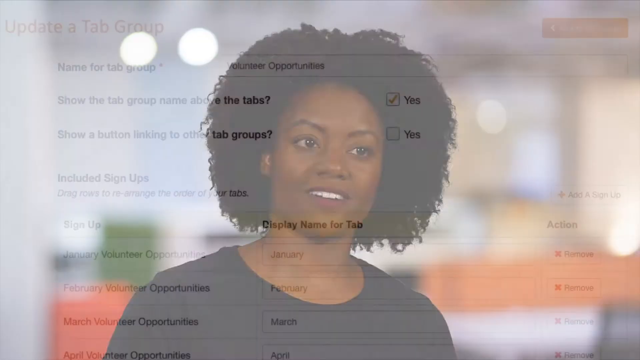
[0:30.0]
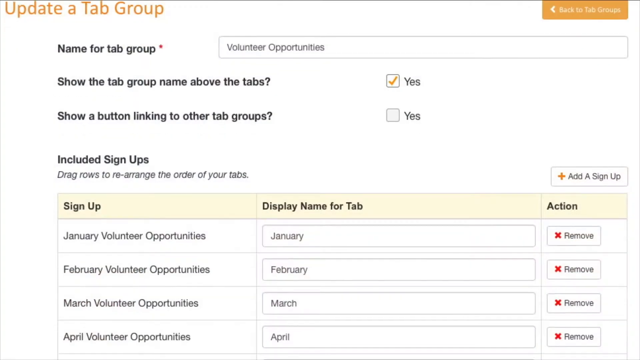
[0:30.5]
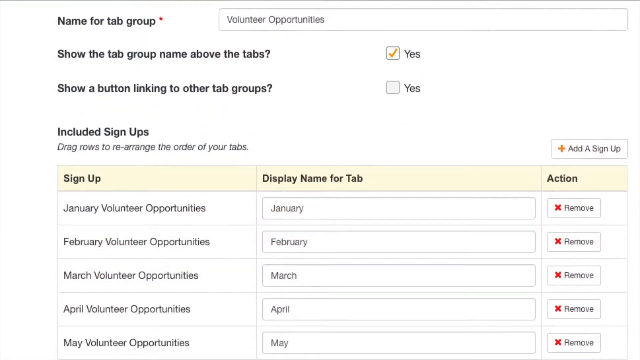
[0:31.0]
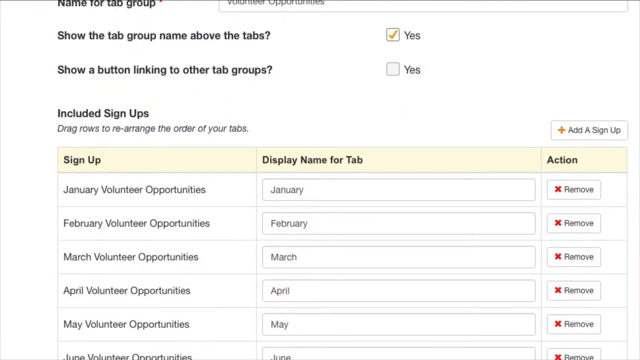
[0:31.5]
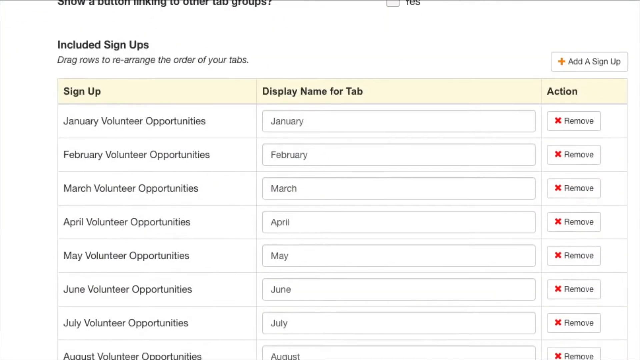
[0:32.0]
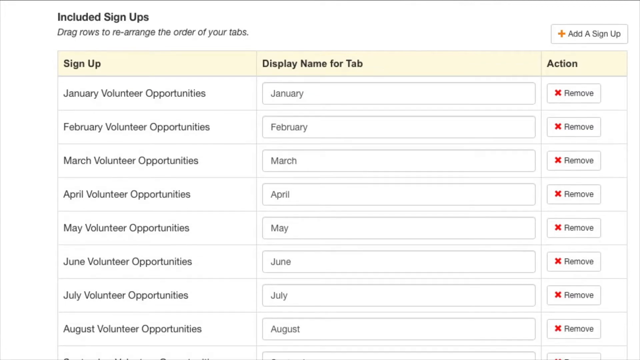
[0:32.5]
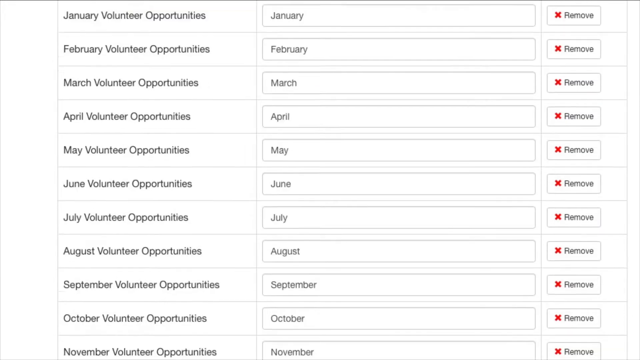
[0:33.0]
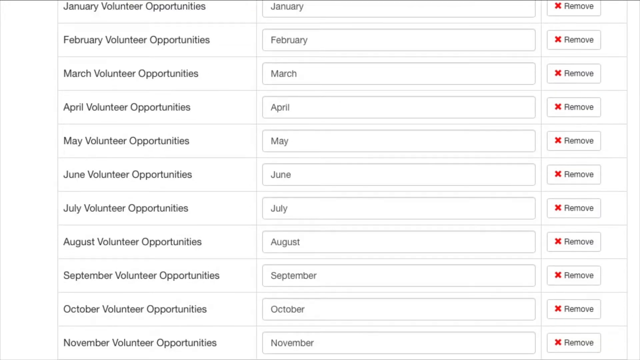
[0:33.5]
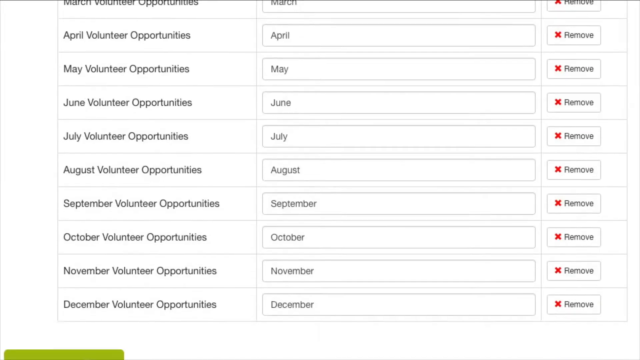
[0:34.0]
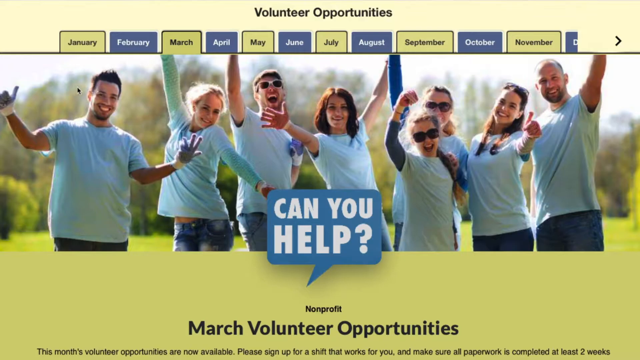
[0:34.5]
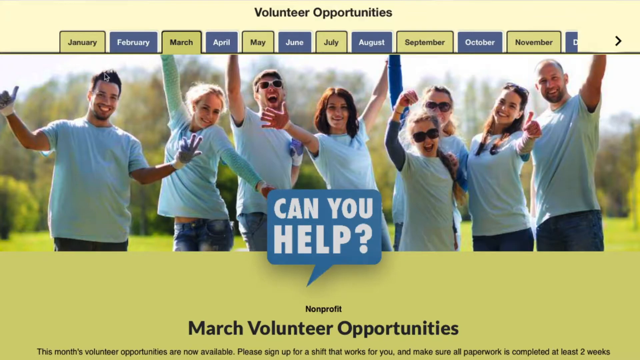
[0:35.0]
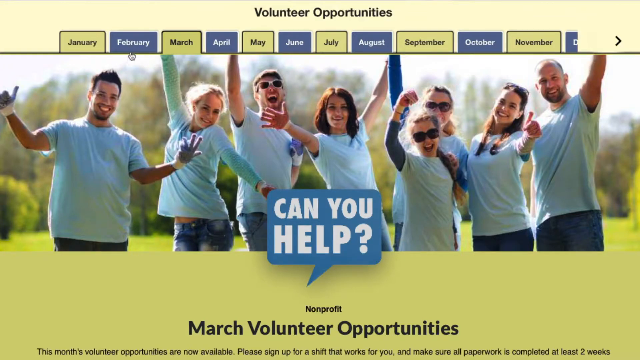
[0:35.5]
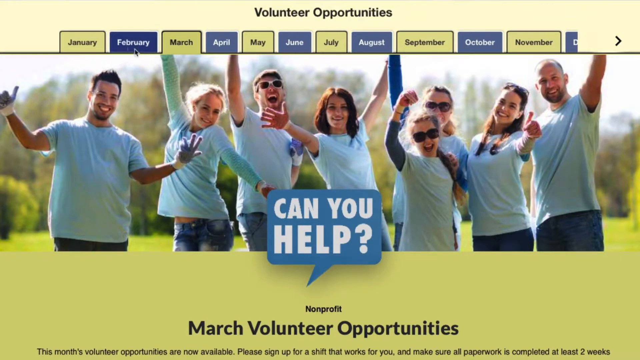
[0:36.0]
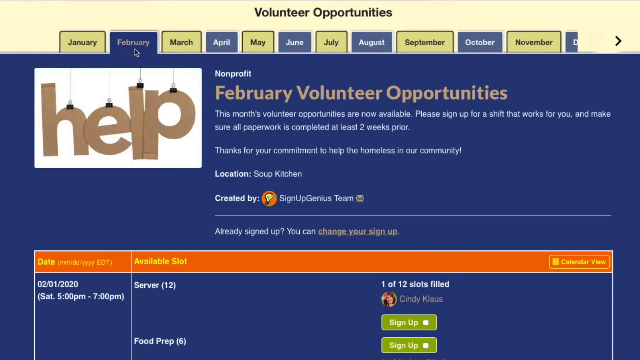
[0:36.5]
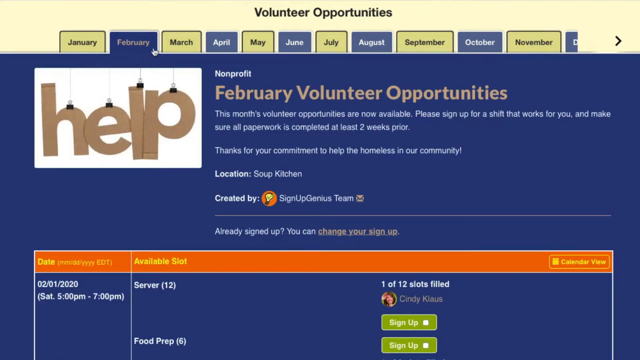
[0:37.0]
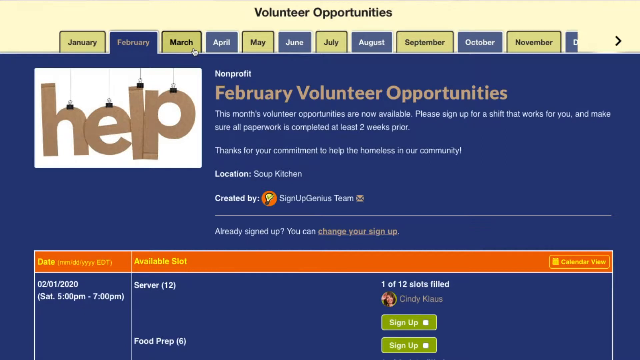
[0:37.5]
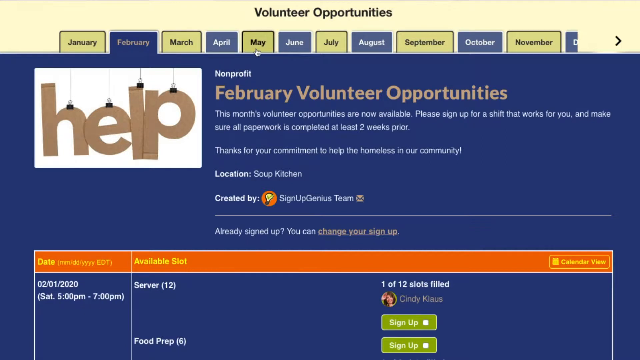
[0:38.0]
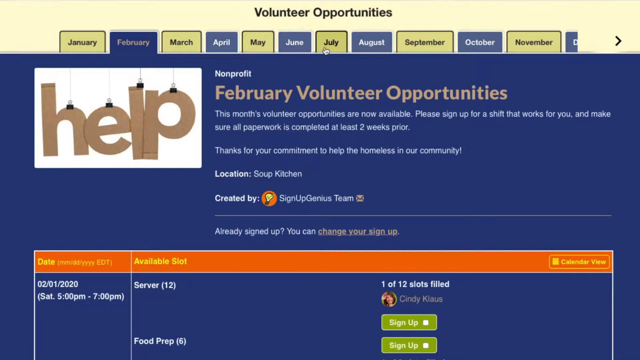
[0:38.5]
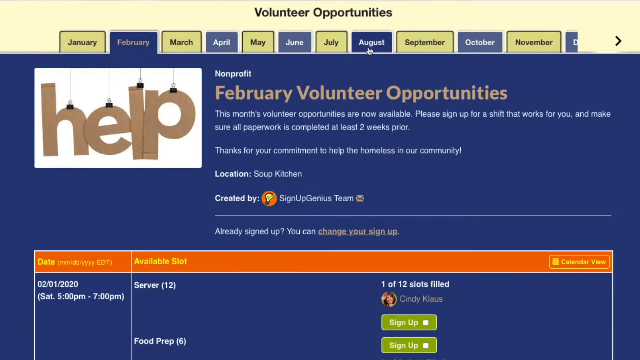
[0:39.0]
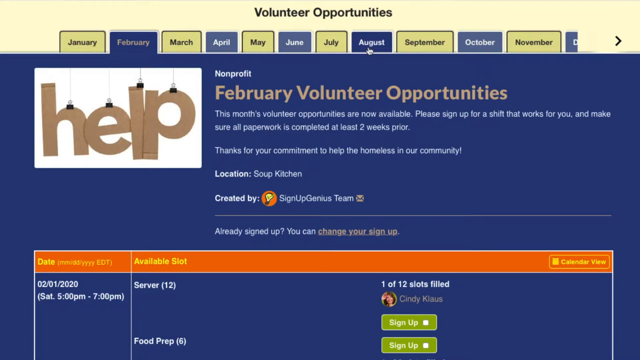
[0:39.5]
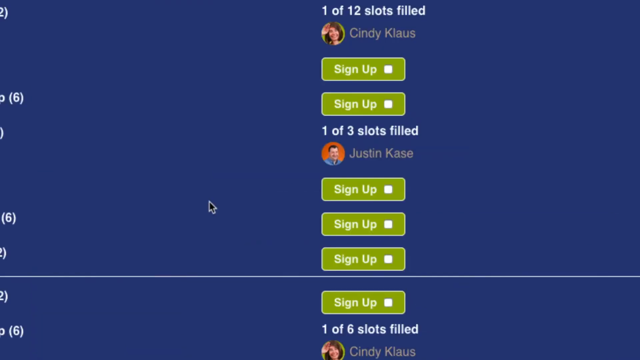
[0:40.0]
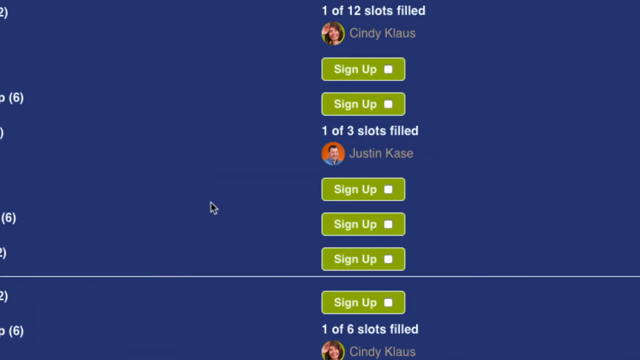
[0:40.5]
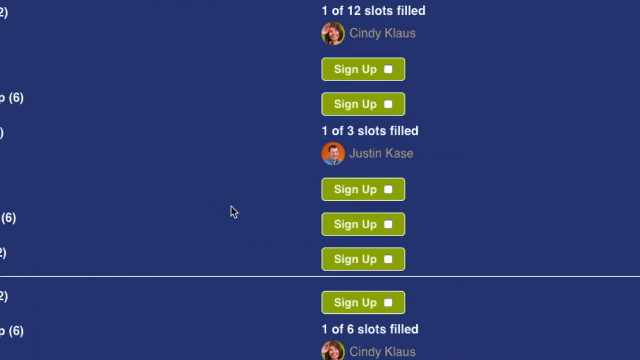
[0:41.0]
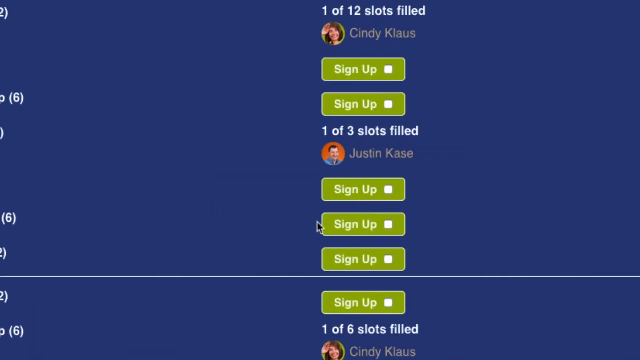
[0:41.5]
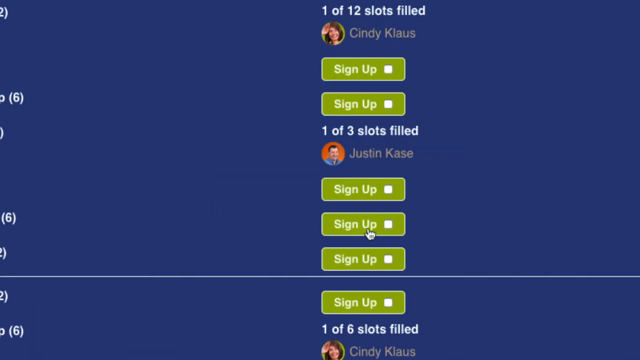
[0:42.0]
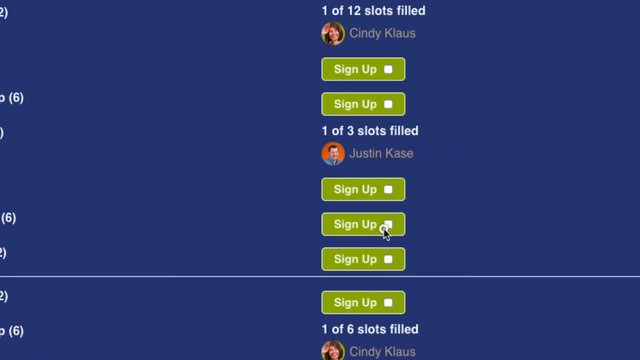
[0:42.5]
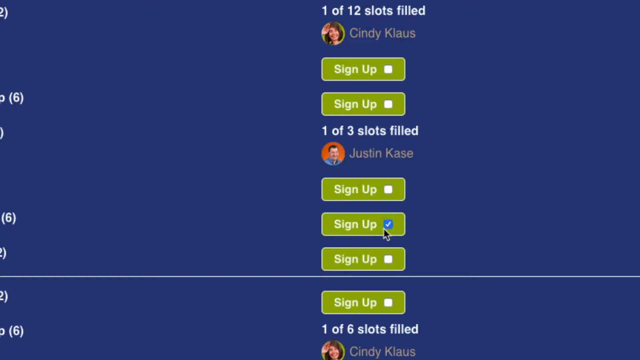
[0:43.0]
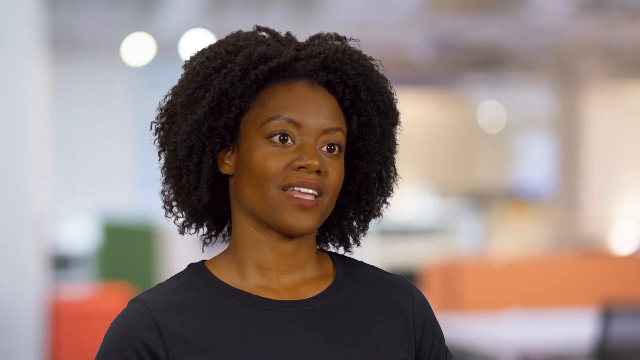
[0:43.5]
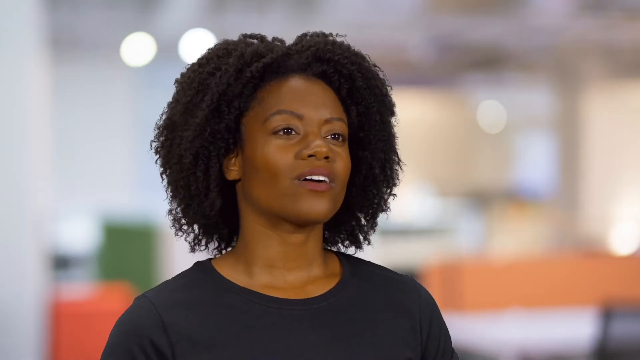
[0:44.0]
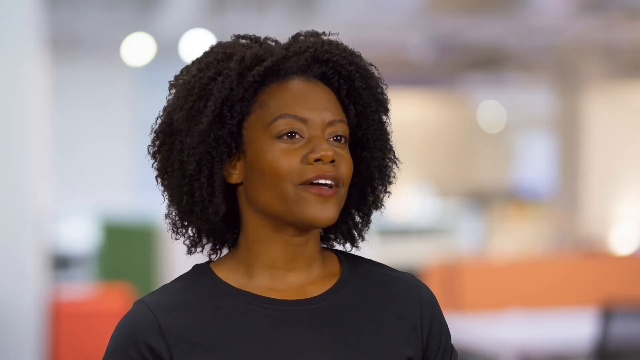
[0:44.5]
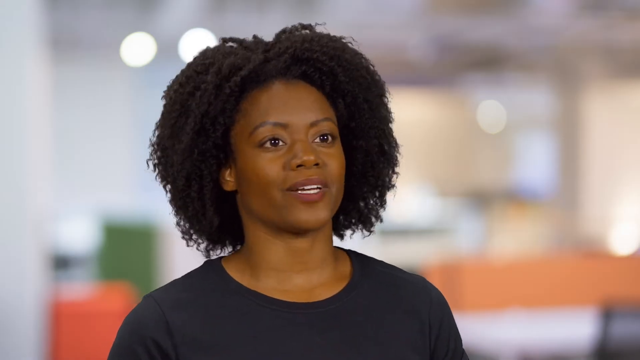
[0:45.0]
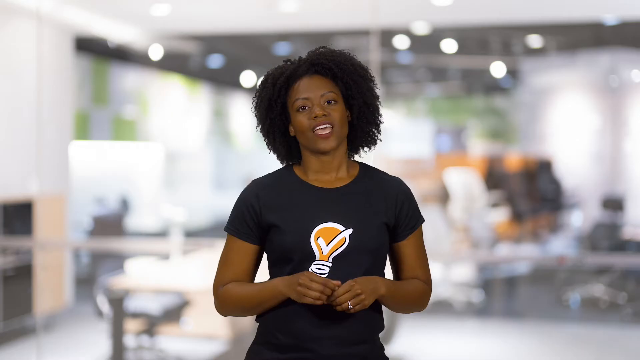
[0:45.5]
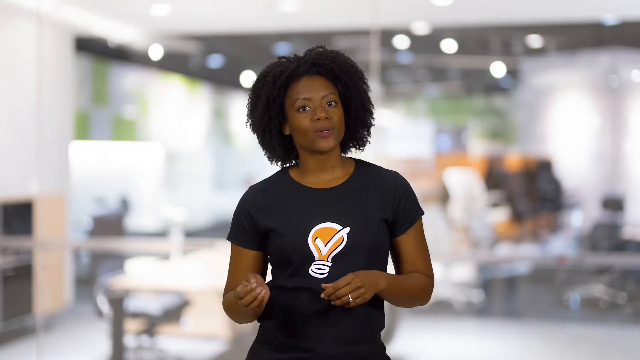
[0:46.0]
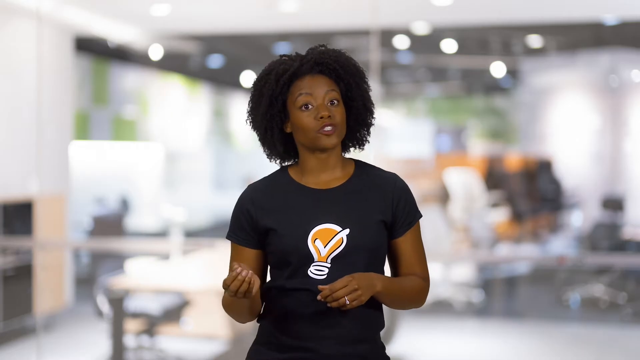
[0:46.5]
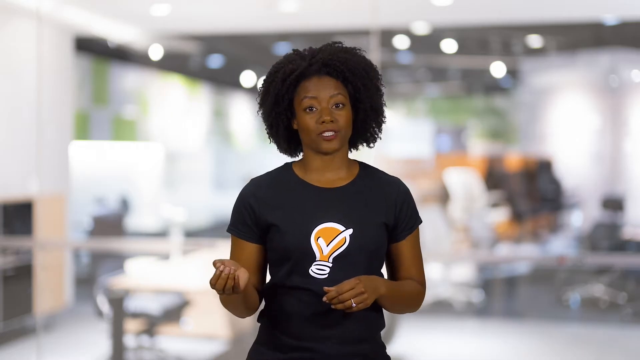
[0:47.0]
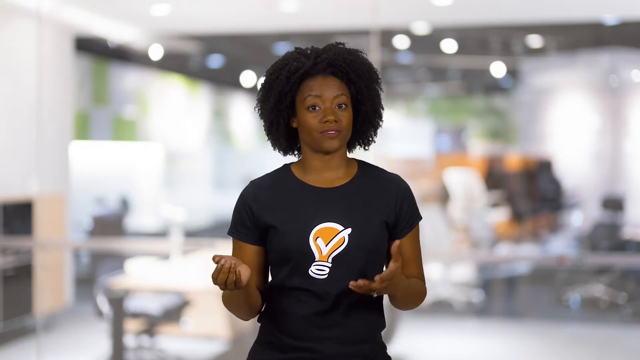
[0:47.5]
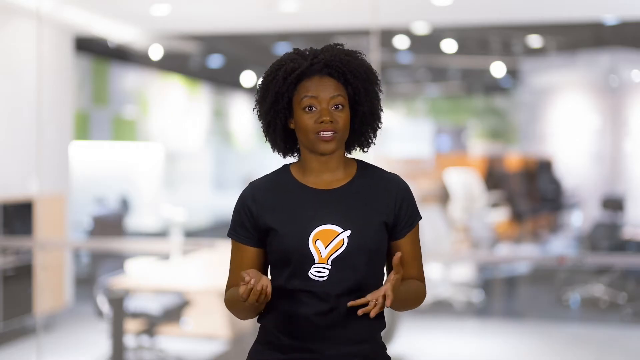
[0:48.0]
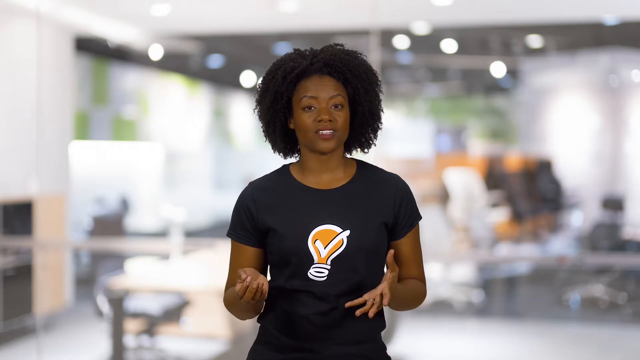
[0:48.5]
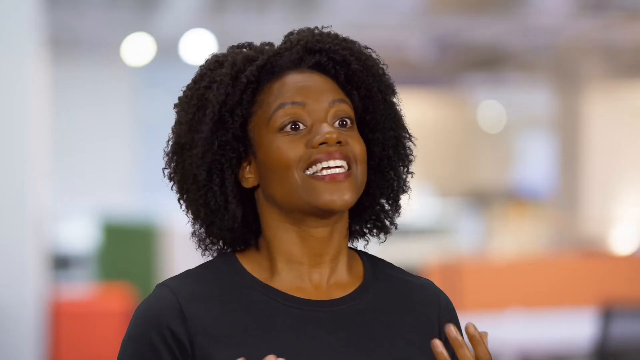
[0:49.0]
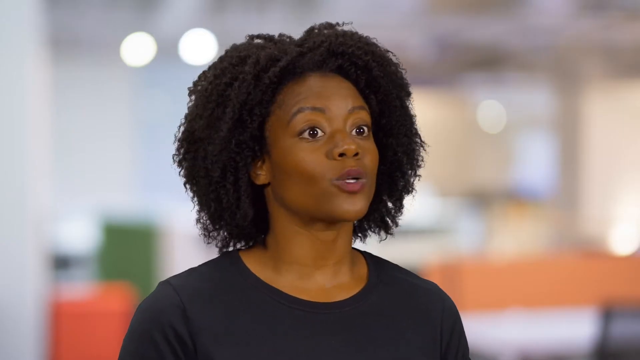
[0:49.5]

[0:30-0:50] A group sign-up organization sheet is shown, used to keep track of the sign-up and change the information for the sign-up page. A top section deals with the name for the tab group and has two check boxes underneath it. The next section is the included sign-ups, with rows shown on a month-to-month level; these rows can be dragged up and down to rearrange the order of the tabs. The user scrolls downward so that the months May, June, July, August, October and November are shown, all the way to December. After a transition, a visually driven large volunteer opportunity page appears. It shows a group of eight relatively young possible volunteers posing for the camera with their arms raised in the air, one person giving a thumbs up. Underneath the photo is a large button that says "Can you help?" in white font on a blue background, and below that is a March volunteer opportunities list. A transition shows a different page of the same website with the February tab highlighted, displaying the February volunteer opportunities. The user scrolls down, revealing sign-up buttons on the page.